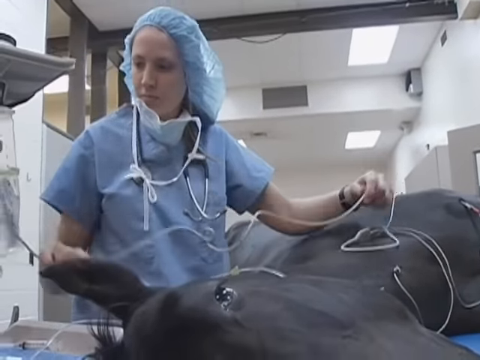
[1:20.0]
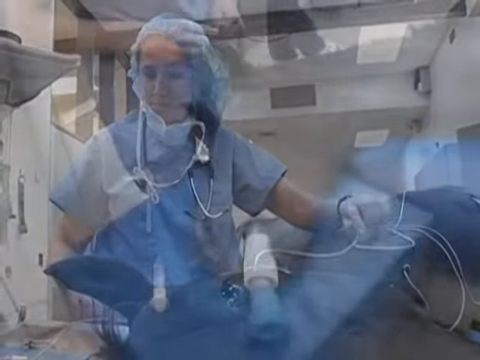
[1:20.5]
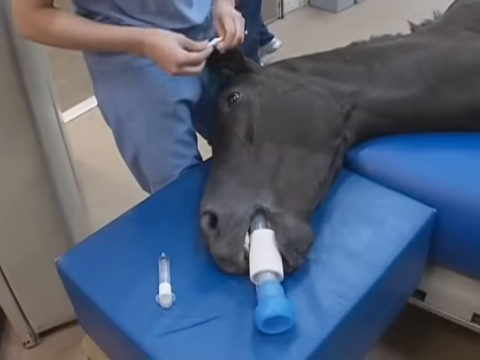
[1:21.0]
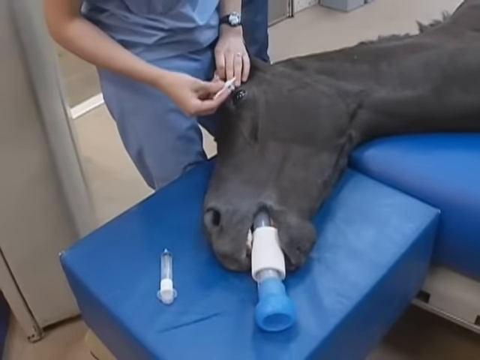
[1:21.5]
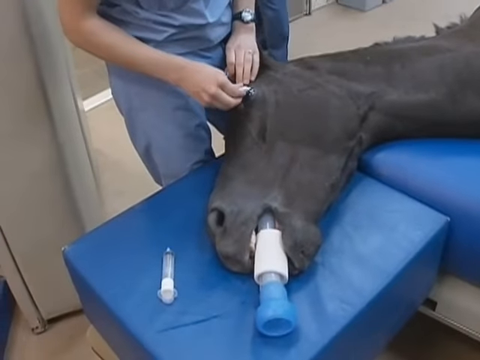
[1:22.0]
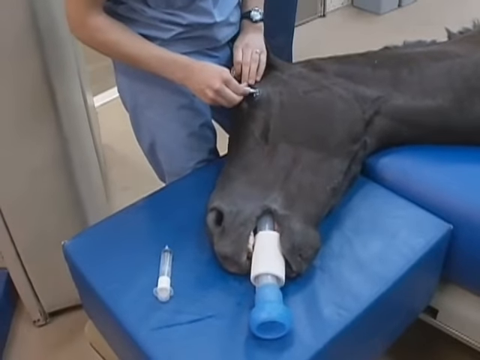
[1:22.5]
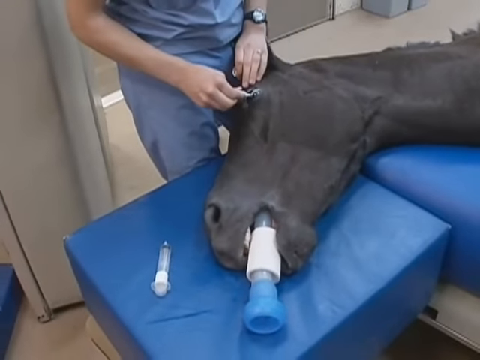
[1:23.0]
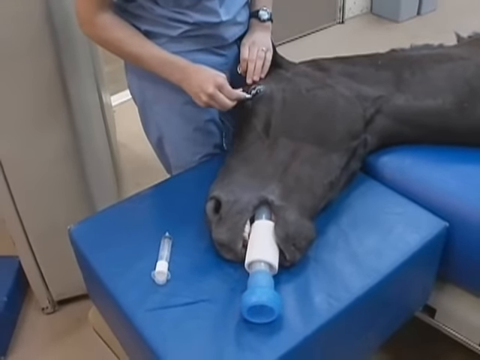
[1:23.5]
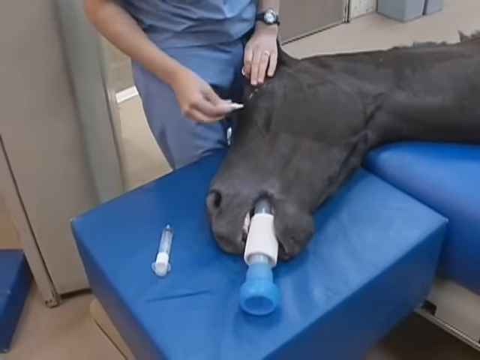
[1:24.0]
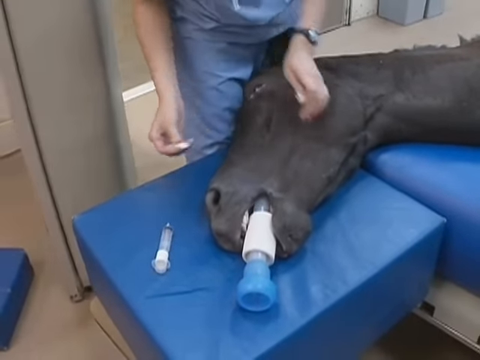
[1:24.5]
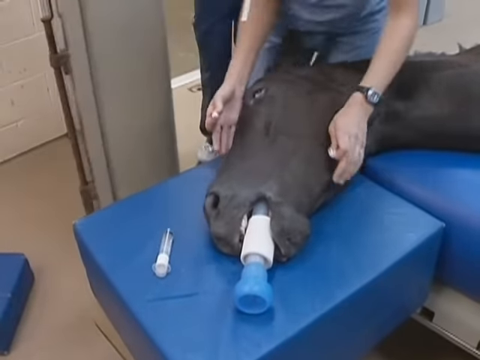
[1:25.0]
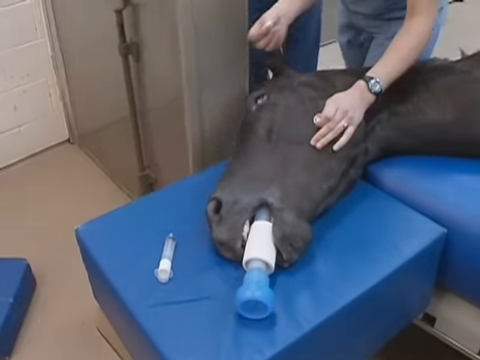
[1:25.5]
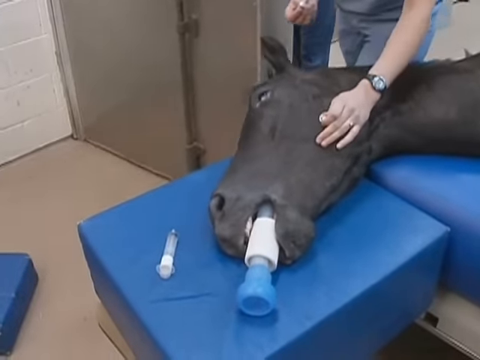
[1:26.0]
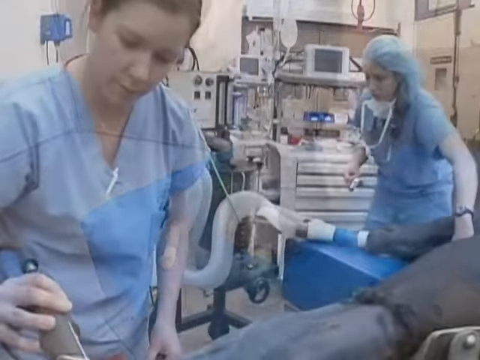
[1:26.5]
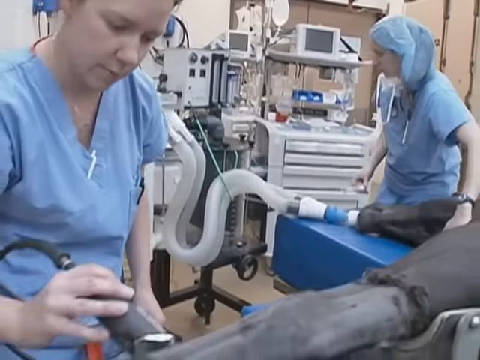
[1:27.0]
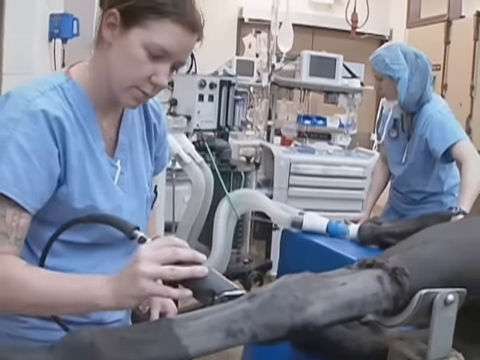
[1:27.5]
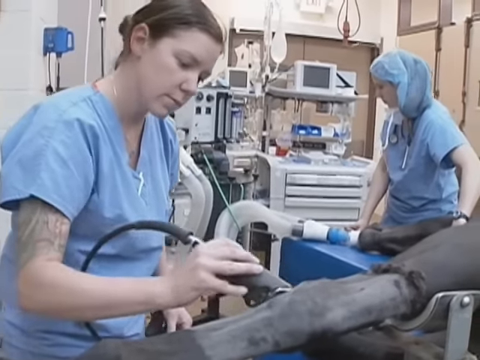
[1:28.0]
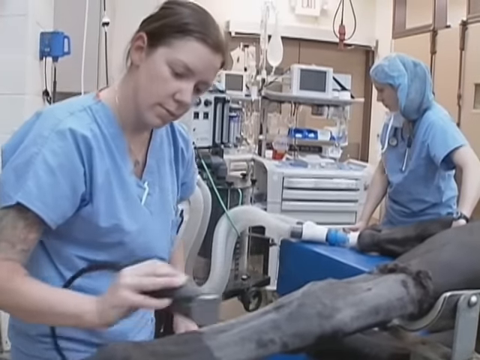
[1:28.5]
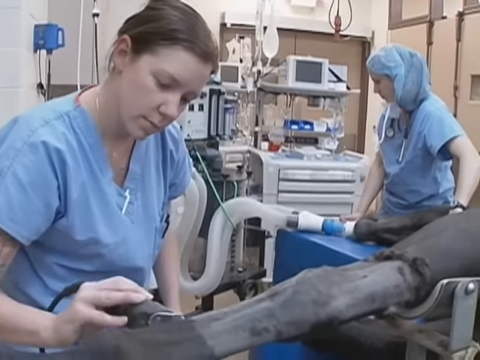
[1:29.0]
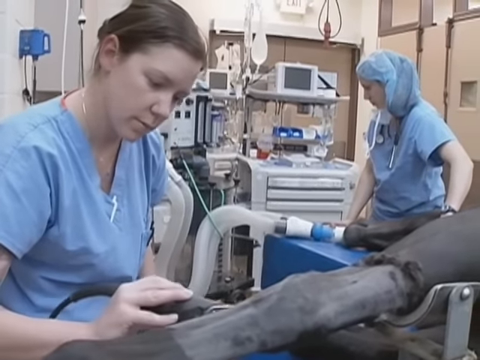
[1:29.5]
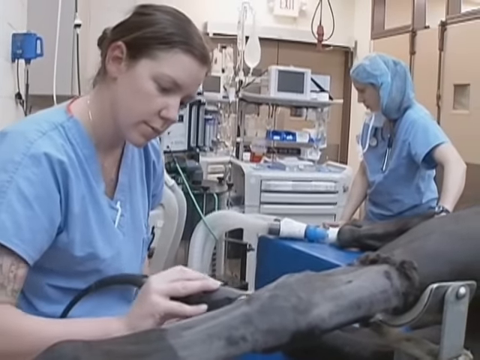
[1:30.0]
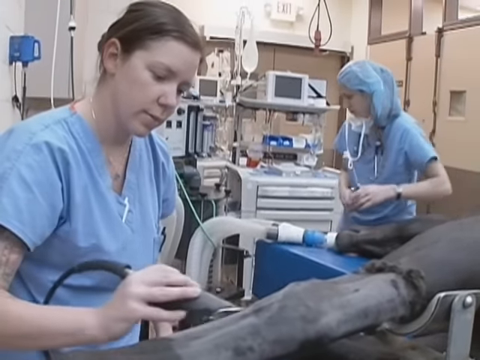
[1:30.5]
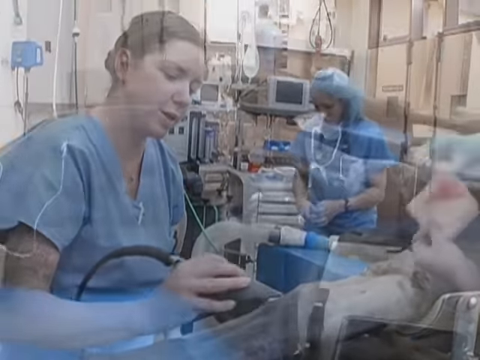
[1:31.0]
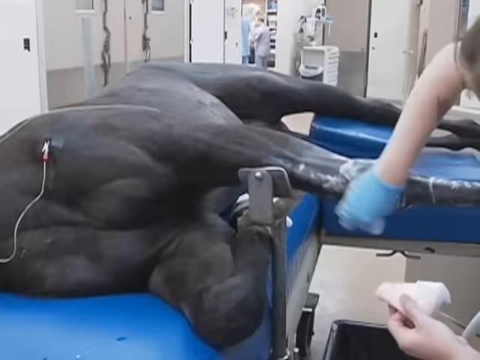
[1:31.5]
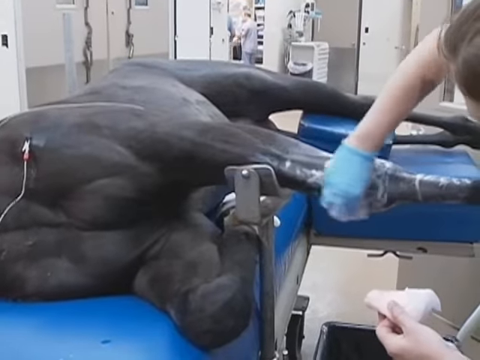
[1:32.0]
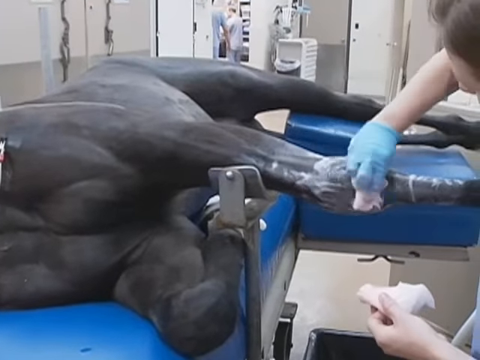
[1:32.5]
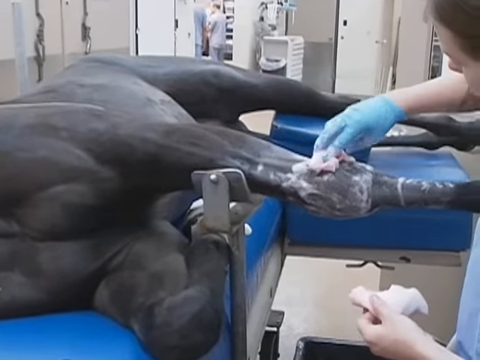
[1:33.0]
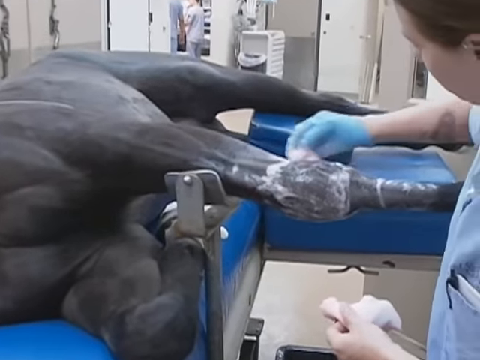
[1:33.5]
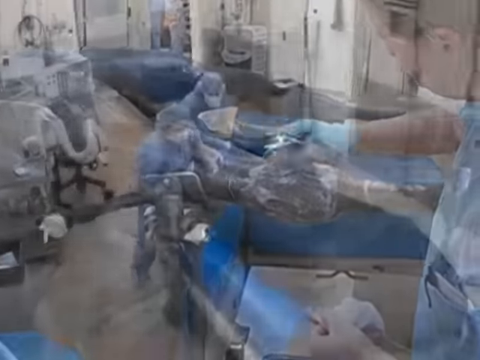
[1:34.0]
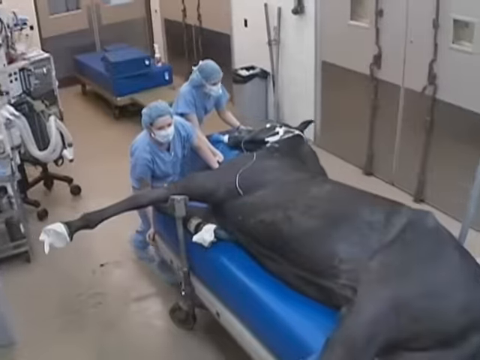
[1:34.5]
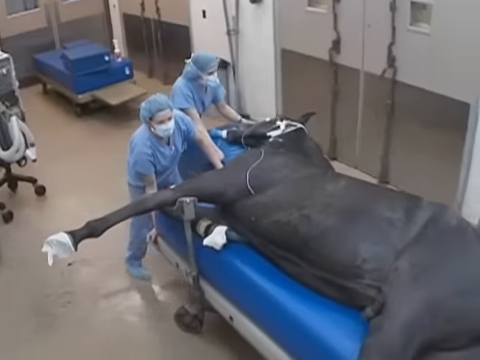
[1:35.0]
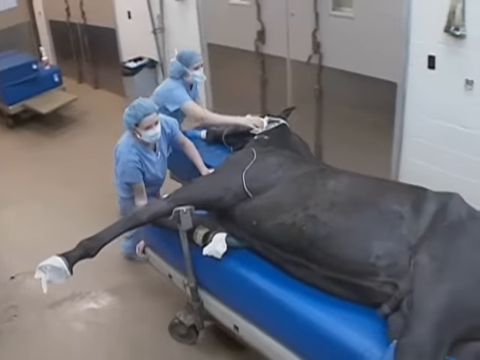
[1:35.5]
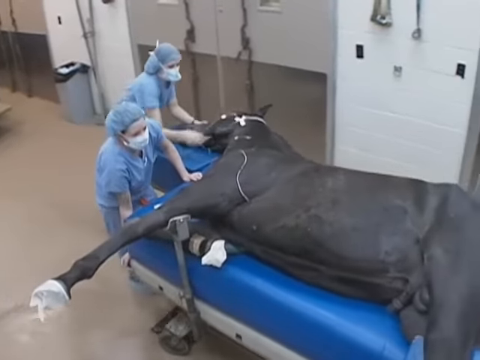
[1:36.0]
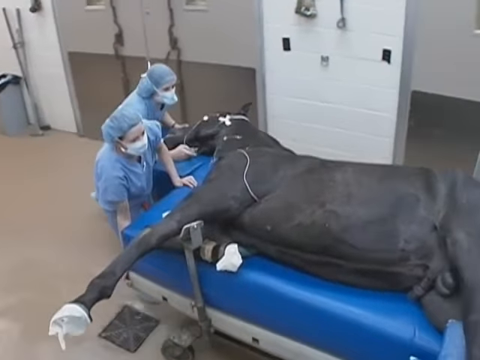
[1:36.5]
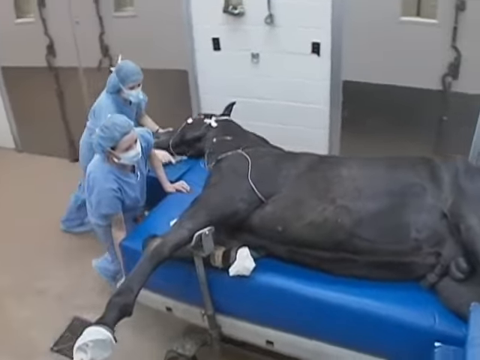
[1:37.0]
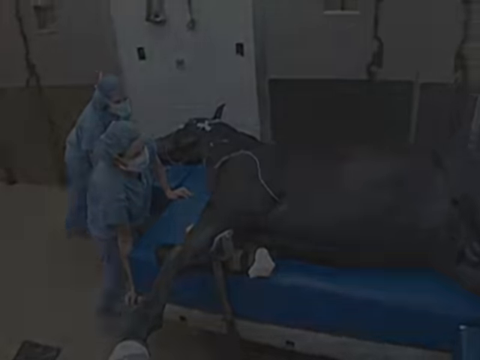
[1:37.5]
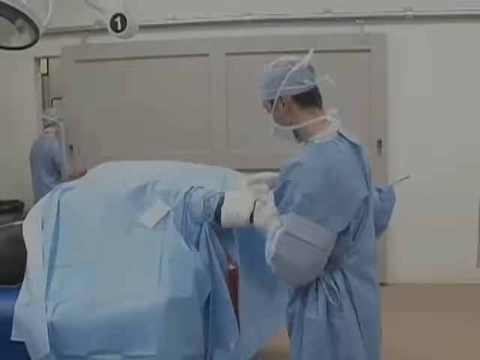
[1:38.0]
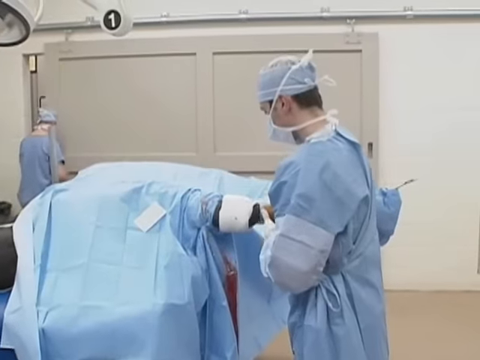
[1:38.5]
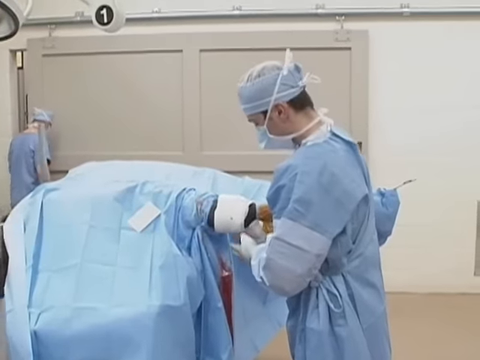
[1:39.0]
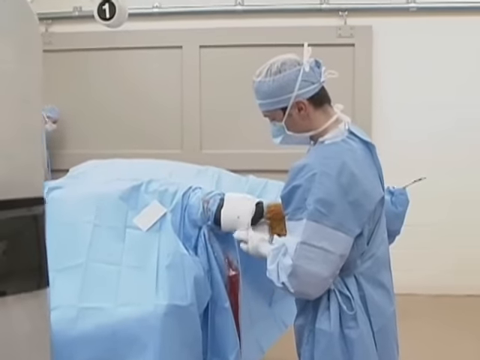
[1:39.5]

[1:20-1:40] The horse has the monitors hooked to it, and there is a video screen next to it, probably connected to the monitors. A close-up shows the horse's head lying on some padding, with the plastic tube in its mouth, probably to keep its airway open. Something like an ointment or eye drops is put in the horse's eyes. One of the techs uses a shaver, apparently shaving the horse's leg and scrubbing it down, seemingly to begin some type of surgical procedure on the leg. The horse is then carted away on the table, which is heavily padded with blue padding, with its leg held up in some sort of stirrup or support device.